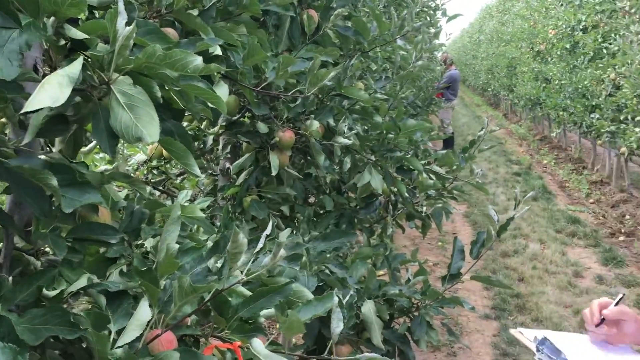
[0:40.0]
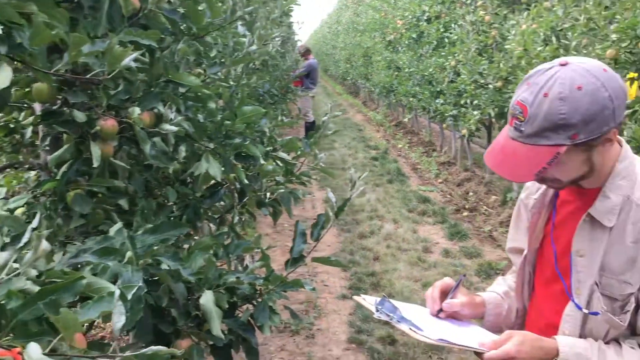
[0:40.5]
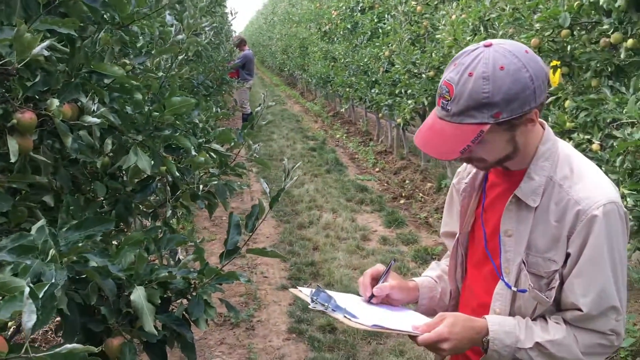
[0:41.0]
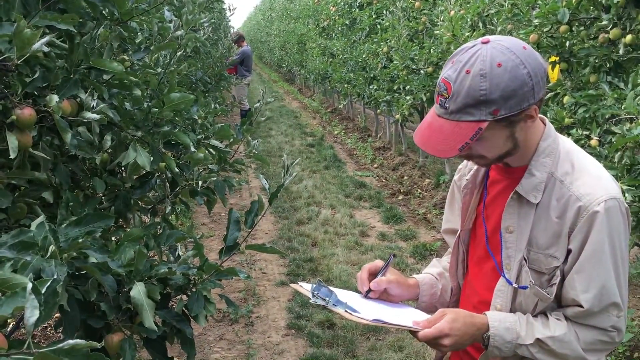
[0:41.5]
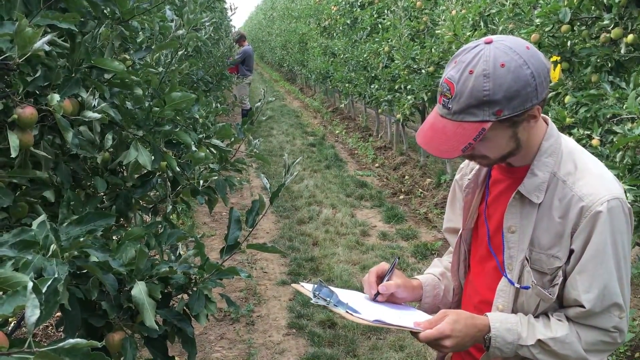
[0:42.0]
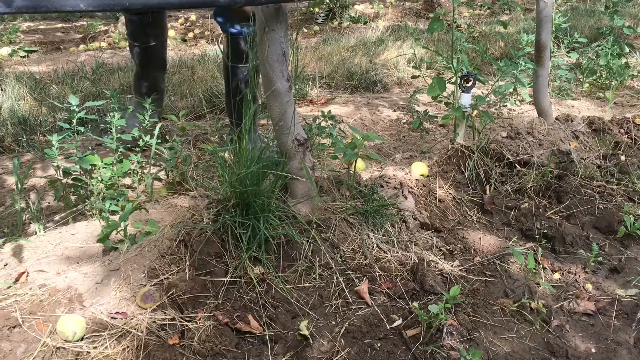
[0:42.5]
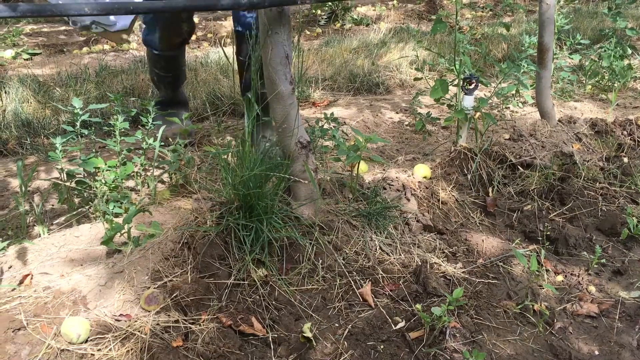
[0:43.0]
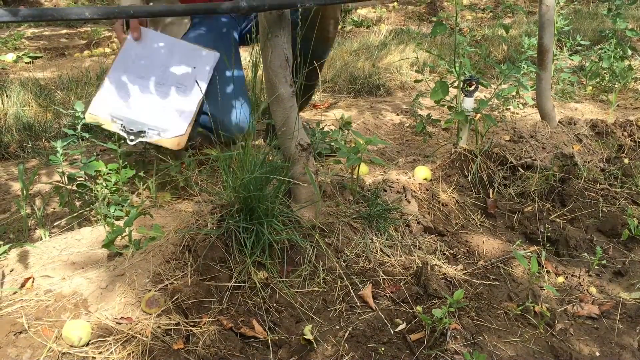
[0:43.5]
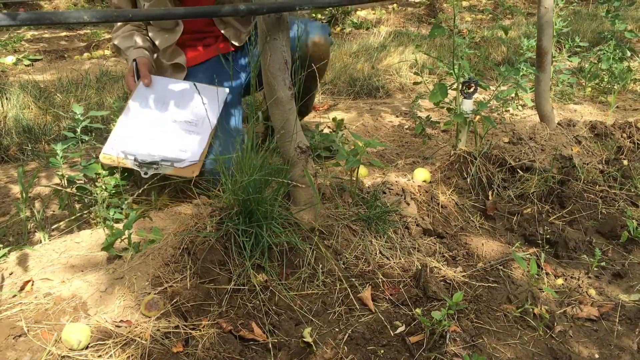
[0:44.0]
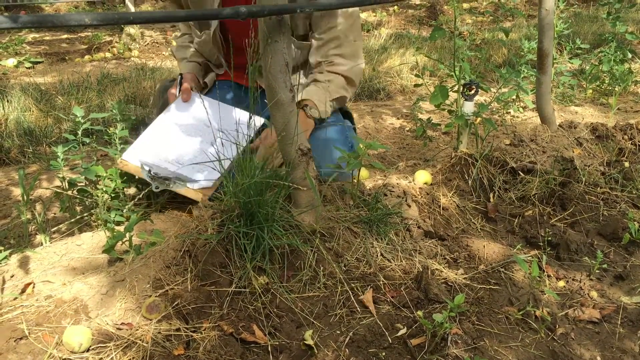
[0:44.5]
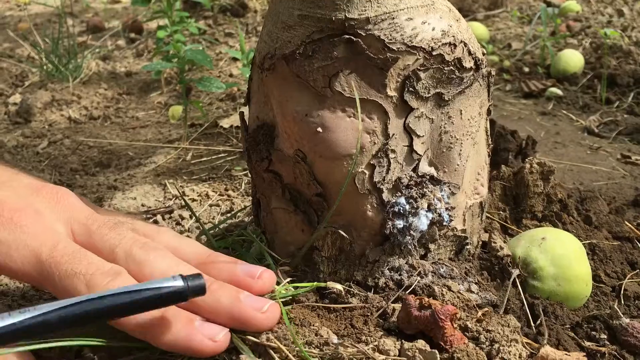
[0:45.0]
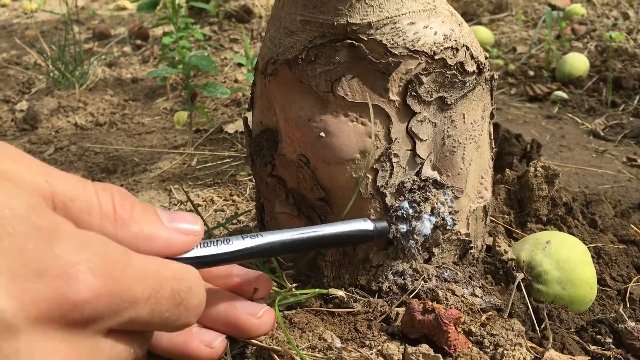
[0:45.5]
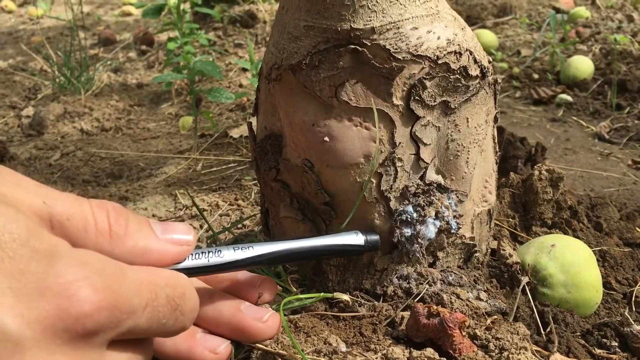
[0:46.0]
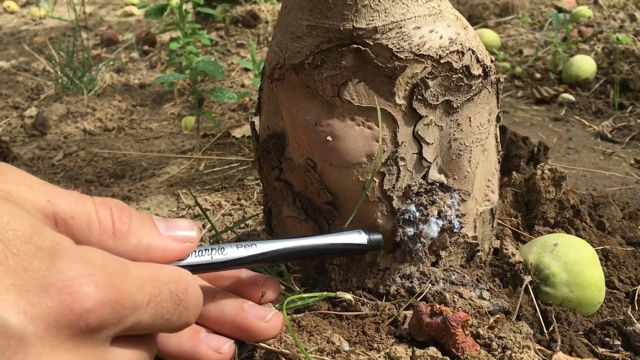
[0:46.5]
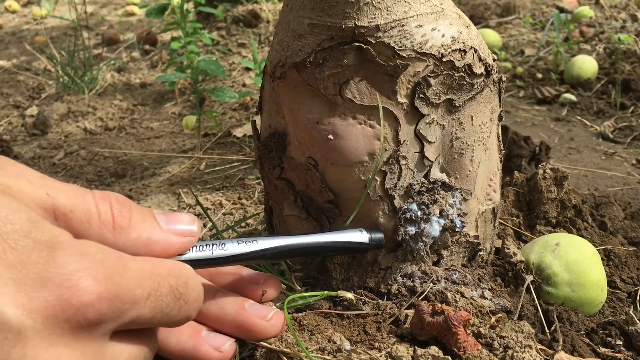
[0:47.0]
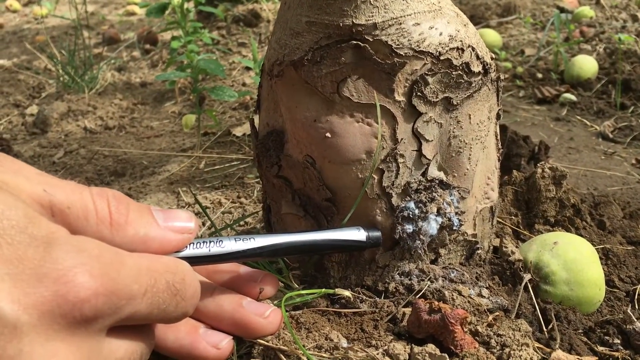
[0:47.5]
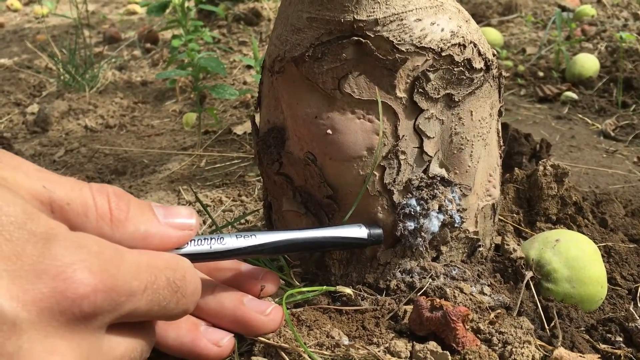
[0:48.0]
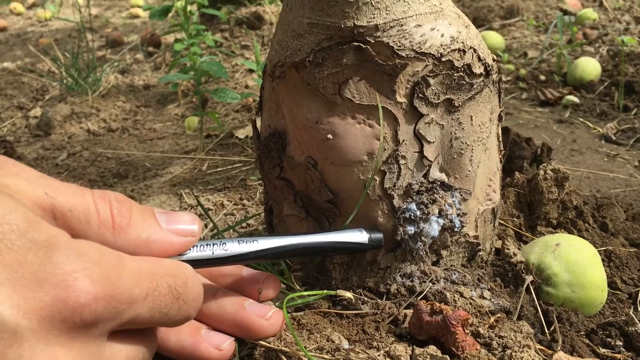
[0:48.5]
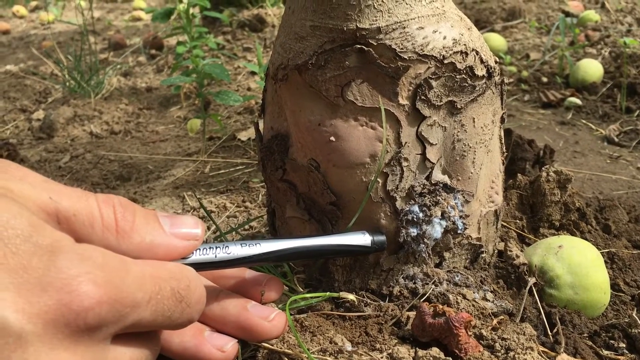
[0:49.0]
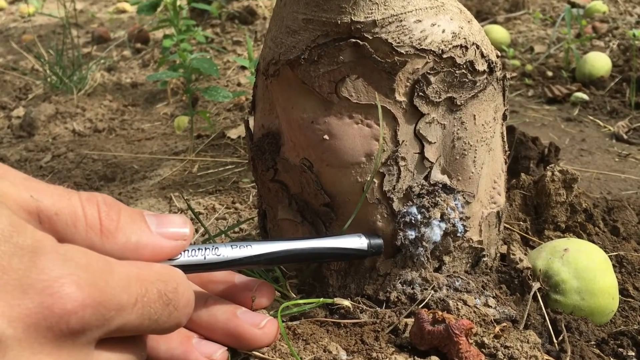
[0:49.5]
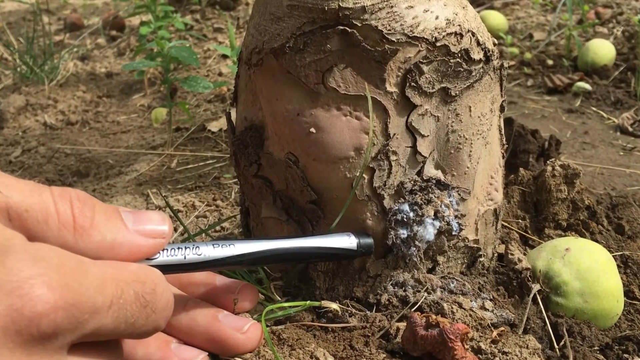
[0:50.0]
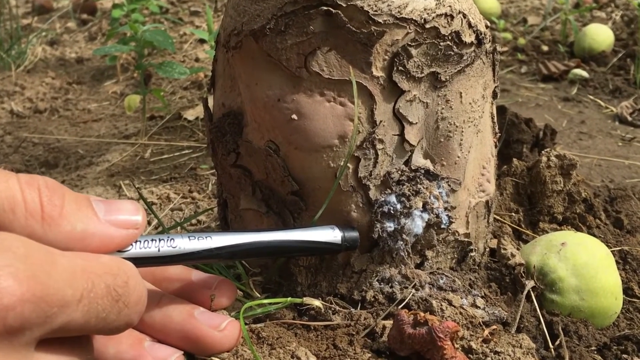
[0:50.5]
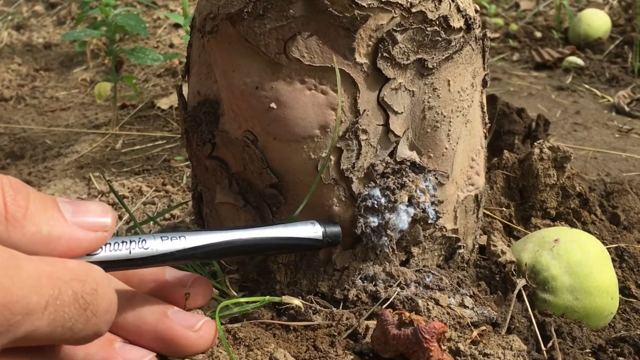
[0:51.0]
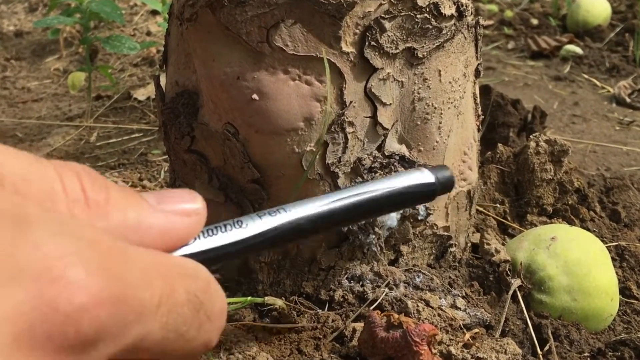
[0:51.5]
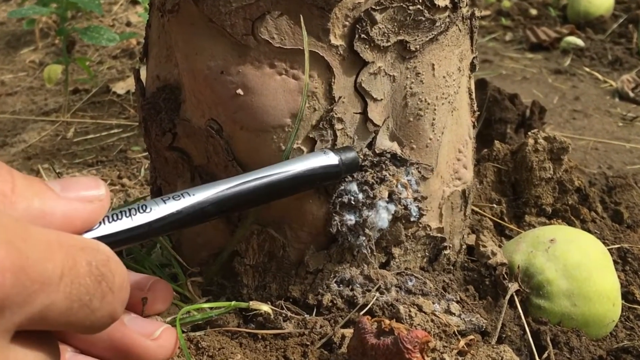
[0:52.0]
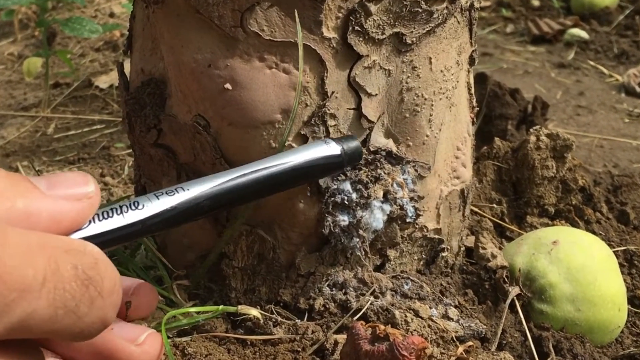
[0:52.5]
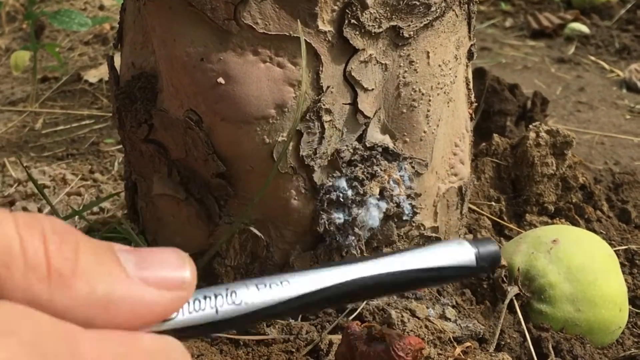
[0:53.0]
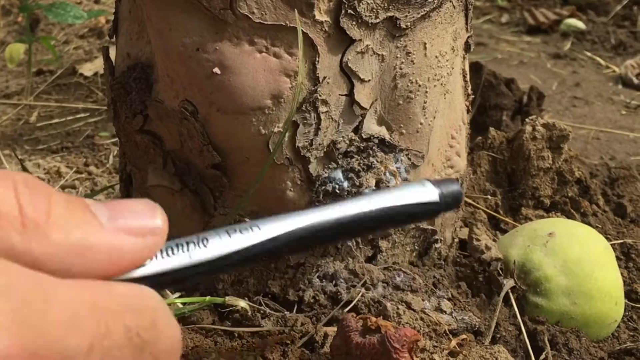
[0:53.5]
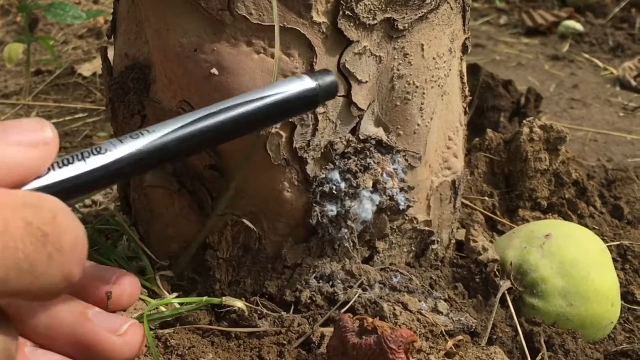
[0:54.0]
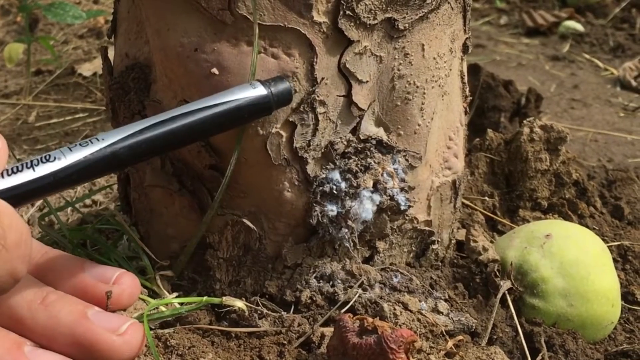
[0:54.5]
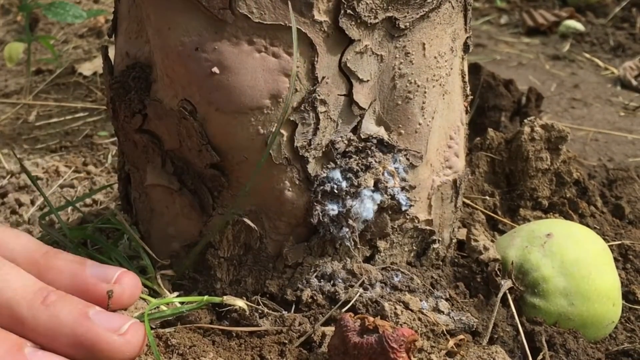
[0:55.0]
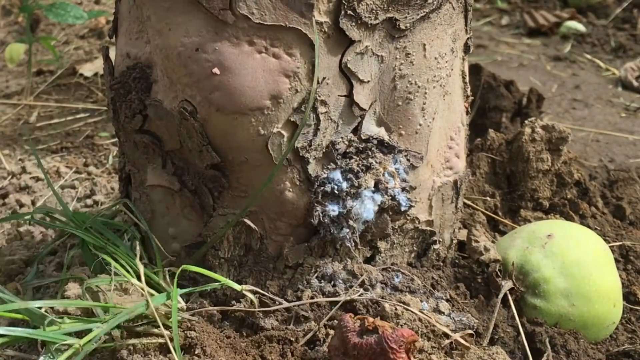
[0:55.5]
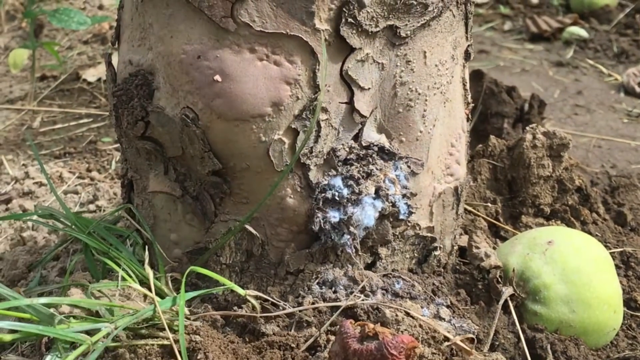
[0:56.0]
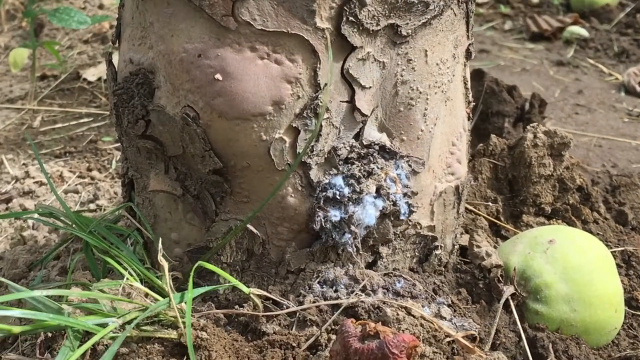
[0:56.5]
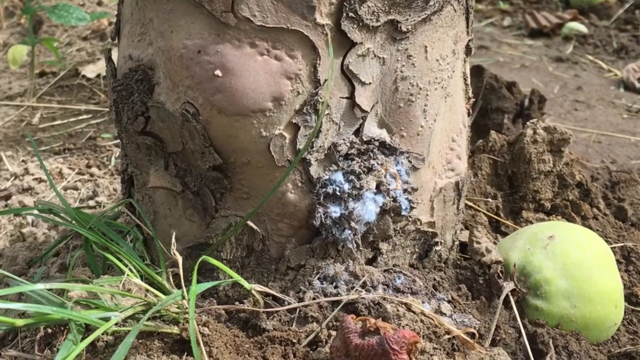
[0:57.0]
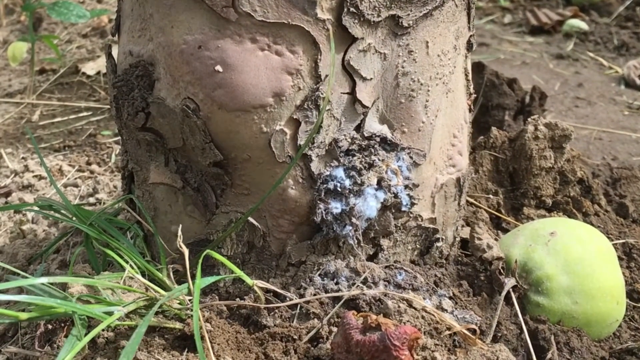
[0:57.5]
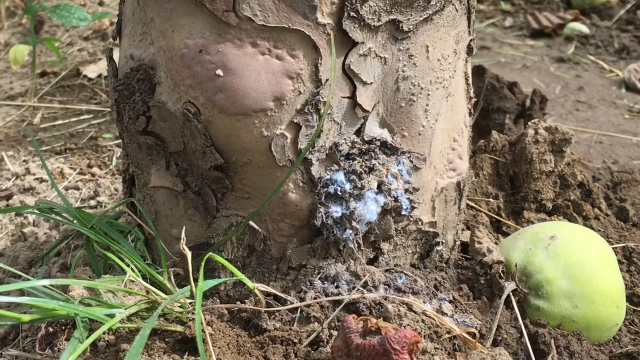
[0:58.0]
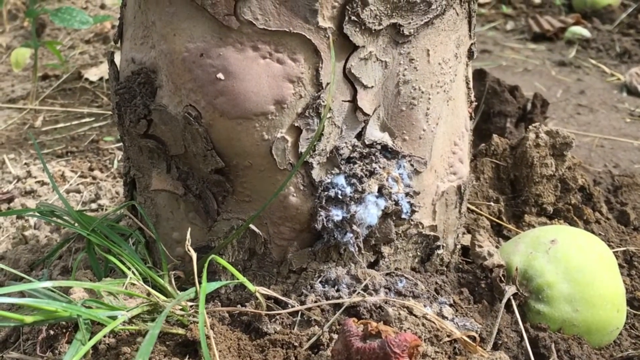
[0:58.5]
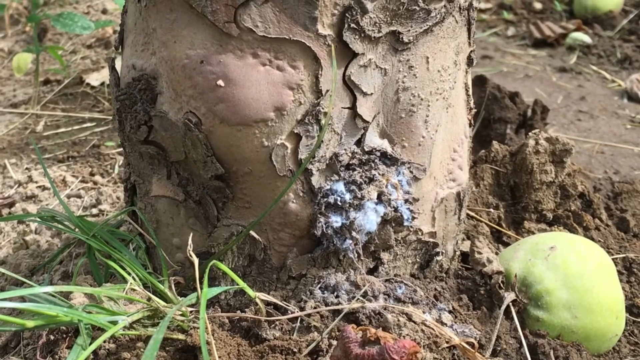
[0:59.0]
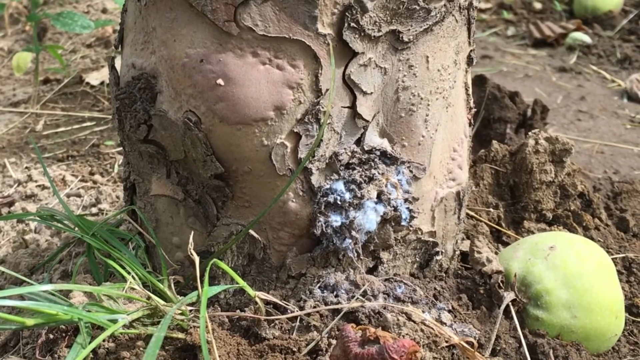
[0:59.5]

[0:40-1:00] The camera pans from the trees on the left across to the right, looking down slightly at the man as he writes on his clipboard with his right hand; he is on the right of the frame. A cut shows the base of two trees, and the man comes into shot kneeling down behind one of them, leaning round to look at its base. Another close-up shows what appears to be the base of one of the trees. A white right hand appears holding a pen, which is pushed into the base of the tree as if to indicate an issue; the pen is moved away from the tree and back toward the base several times as if to draw focus to the spot. The camera zooms into the base of the tree as he does this, and what appears to be a grey mould is visible at the side of the tree in one section.